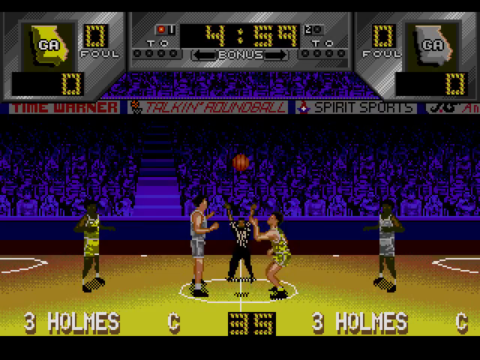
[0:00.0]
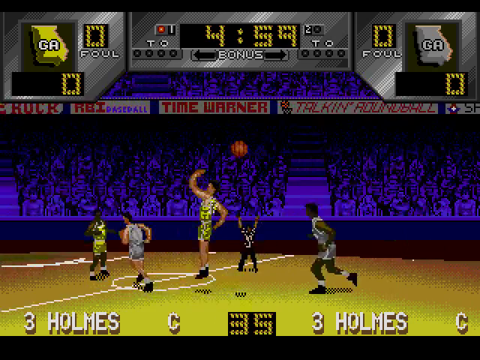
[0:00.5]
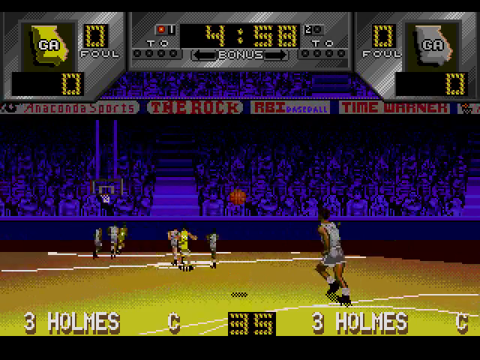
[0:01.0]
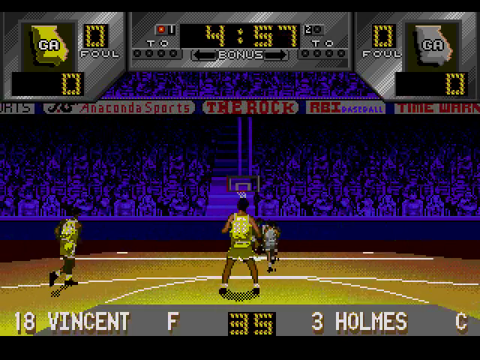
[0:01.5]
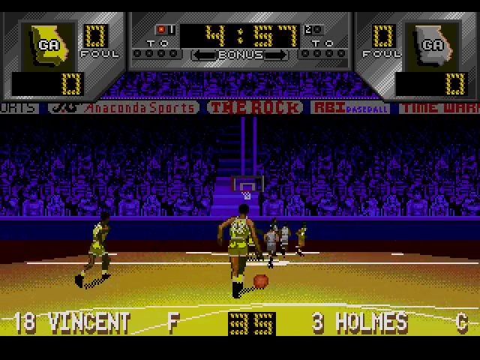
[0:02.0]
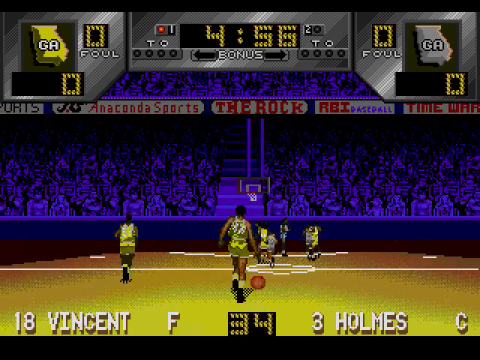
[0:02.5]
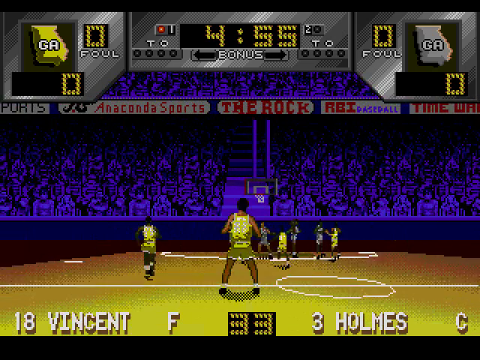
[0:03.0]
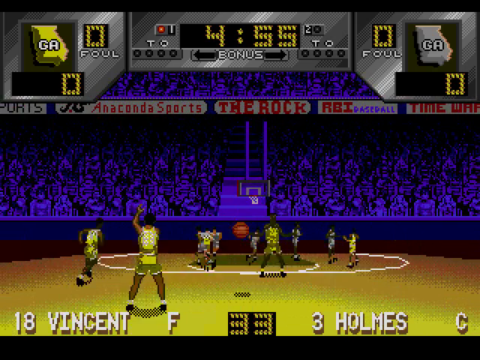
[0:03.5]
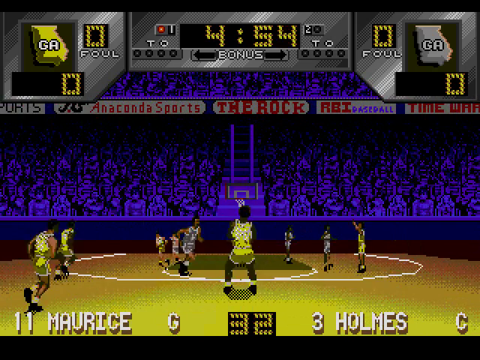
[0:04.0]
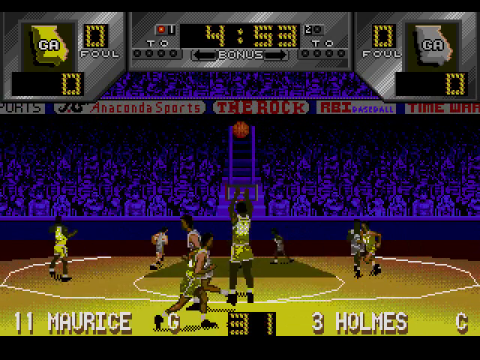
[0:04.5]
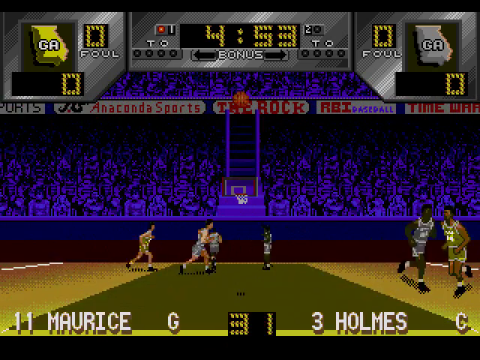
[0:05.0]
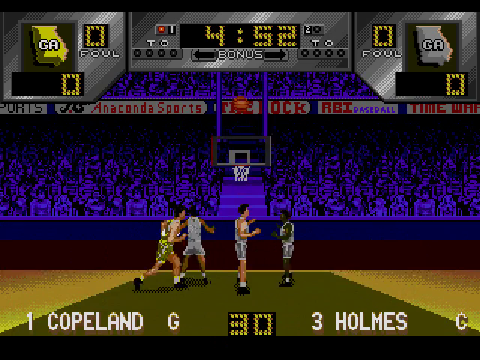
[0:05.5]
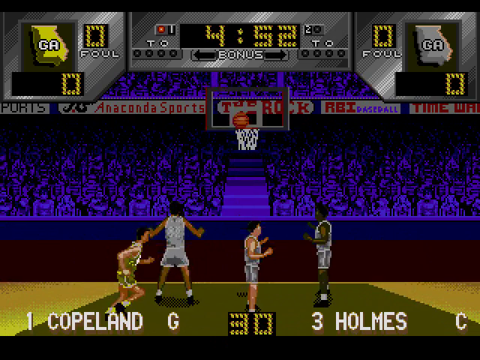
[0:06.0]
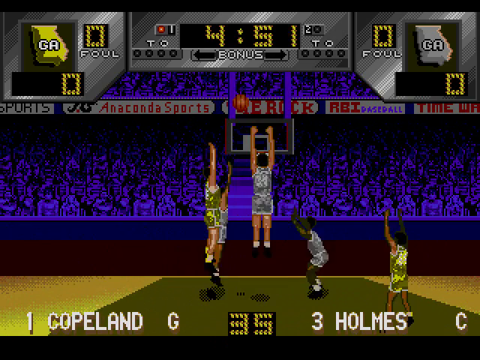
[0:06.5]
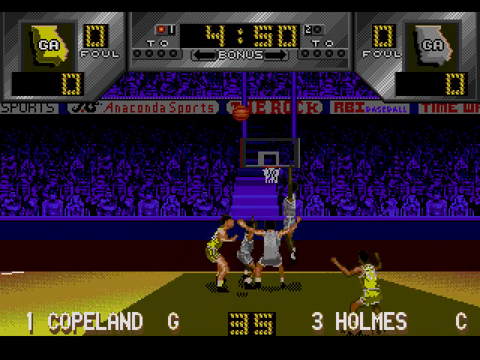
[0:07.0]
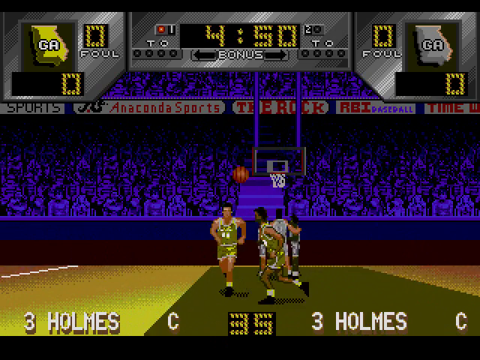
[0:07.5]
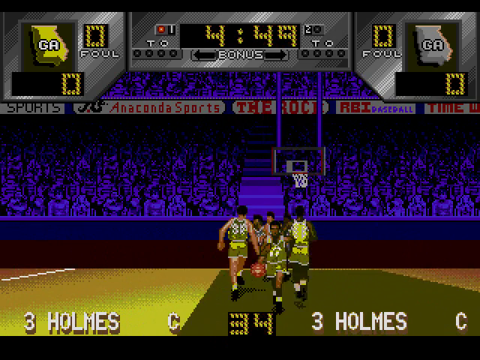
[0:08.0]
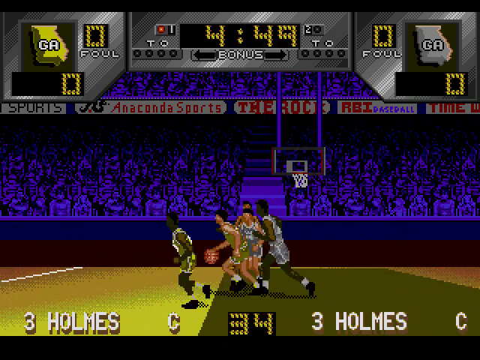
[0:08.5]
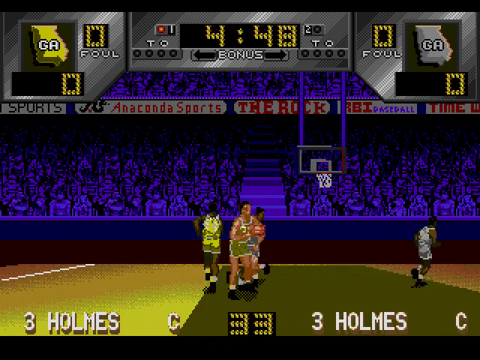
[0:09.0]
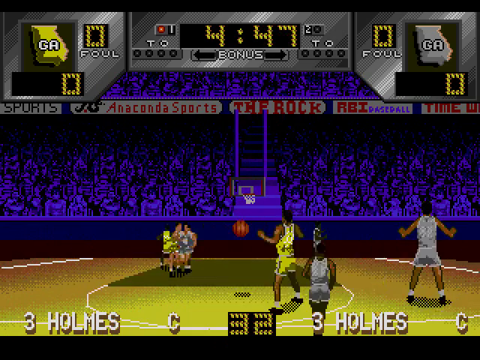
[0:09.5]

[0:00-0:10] This is a basketball video game that looks quite old-fashioned, with a pixelated screen and poor-quality graphics. The camera angle appears to spin so that the opposite side of the court is visible. Someone has just made a shot. Scores are shown at the bottom of the screen, apparently reading "3-5", though they are difficult to read. The team the player represents appears to be the yellow team, playing against a team wearing grey uniforms.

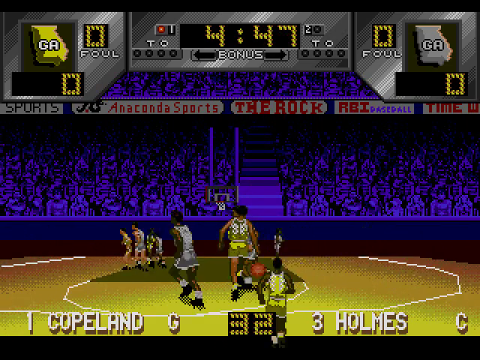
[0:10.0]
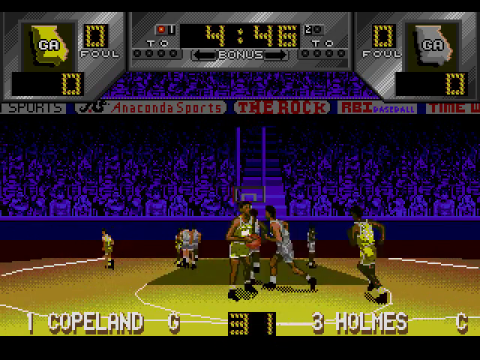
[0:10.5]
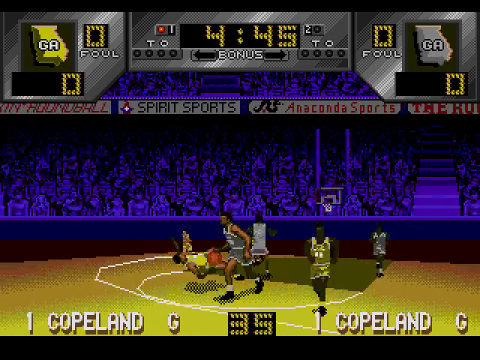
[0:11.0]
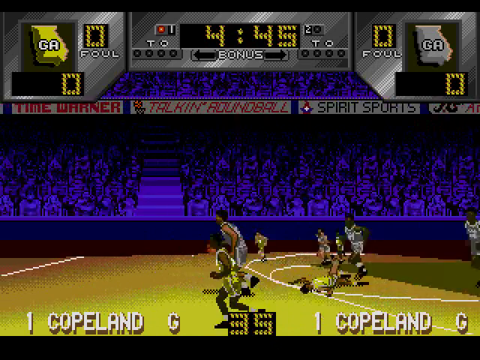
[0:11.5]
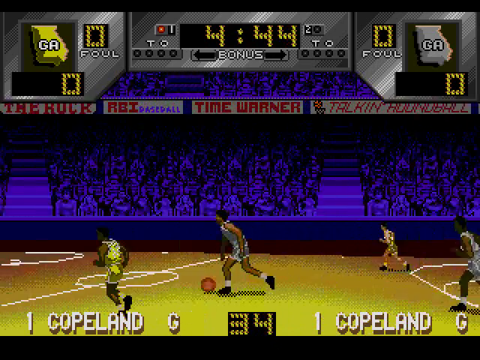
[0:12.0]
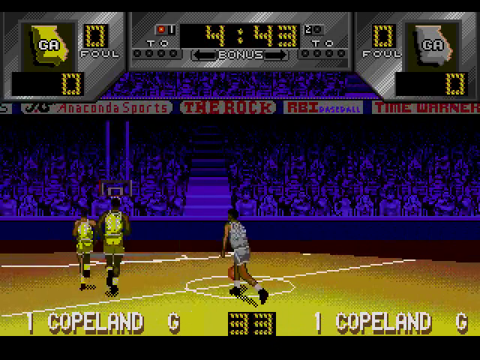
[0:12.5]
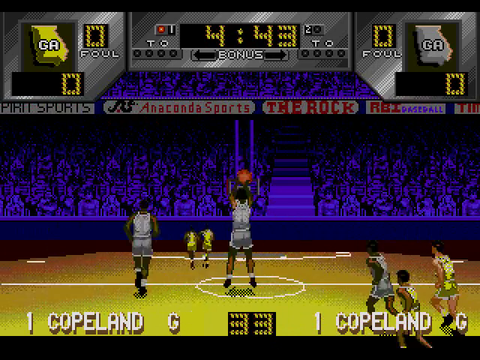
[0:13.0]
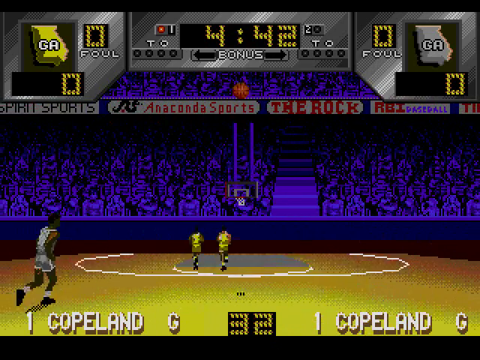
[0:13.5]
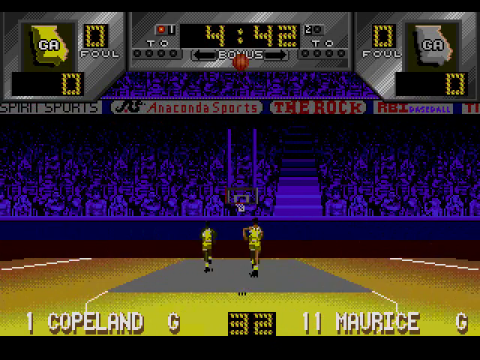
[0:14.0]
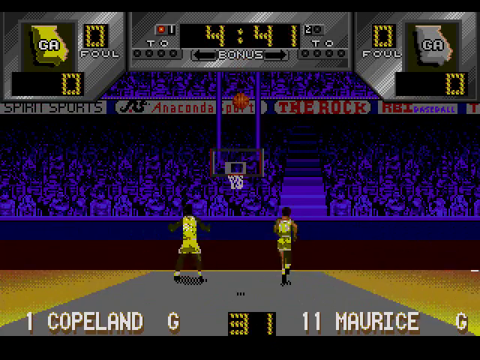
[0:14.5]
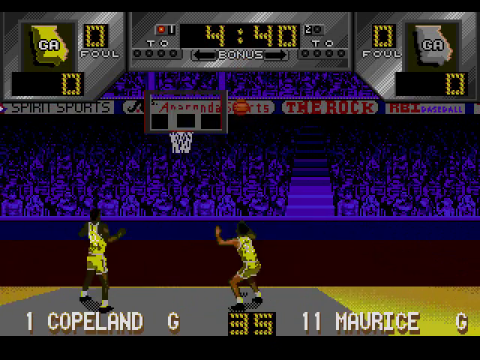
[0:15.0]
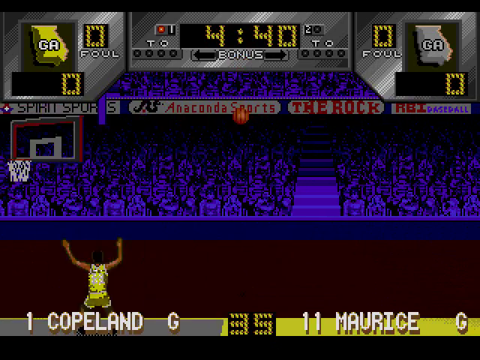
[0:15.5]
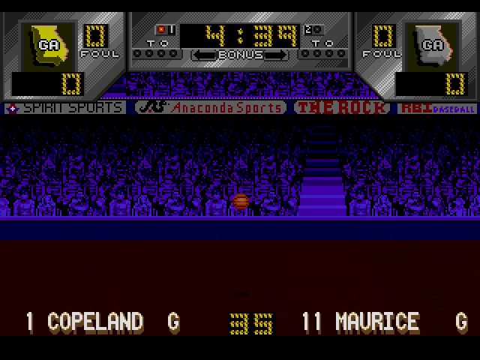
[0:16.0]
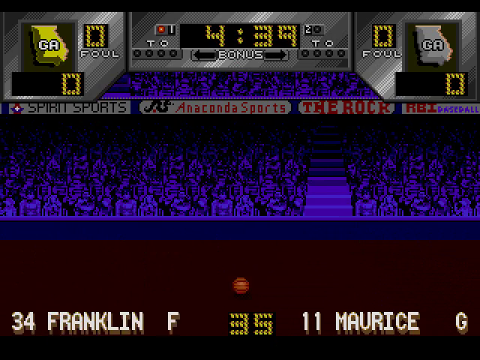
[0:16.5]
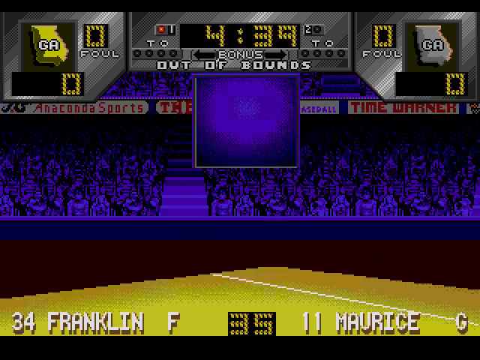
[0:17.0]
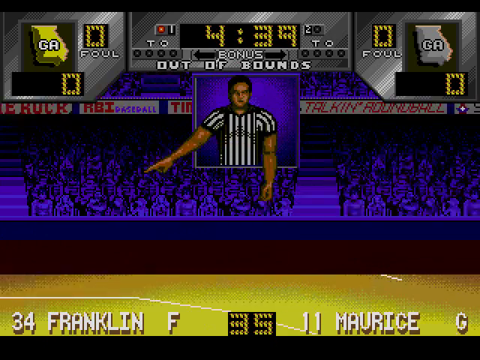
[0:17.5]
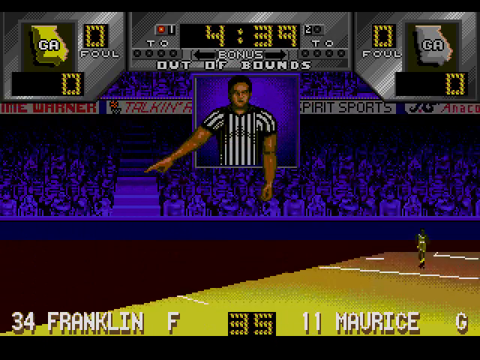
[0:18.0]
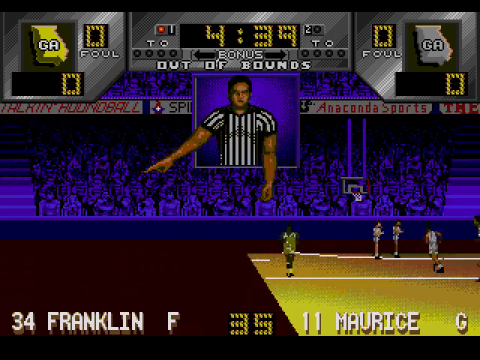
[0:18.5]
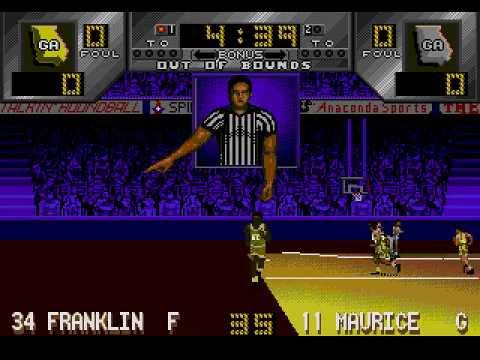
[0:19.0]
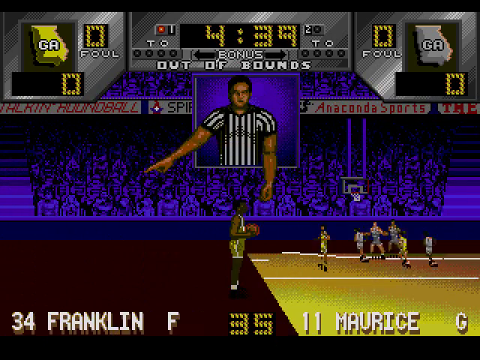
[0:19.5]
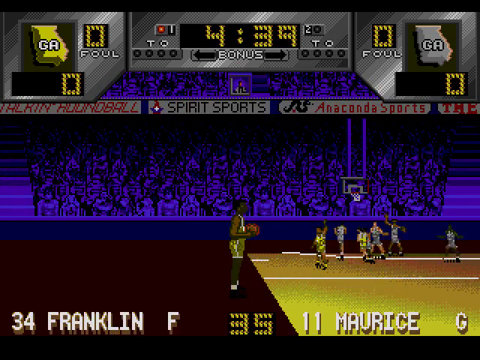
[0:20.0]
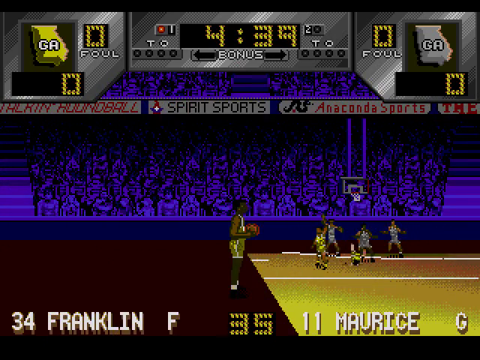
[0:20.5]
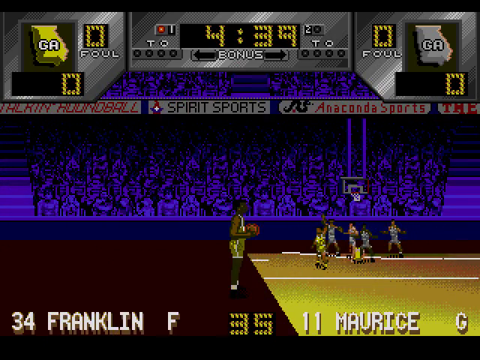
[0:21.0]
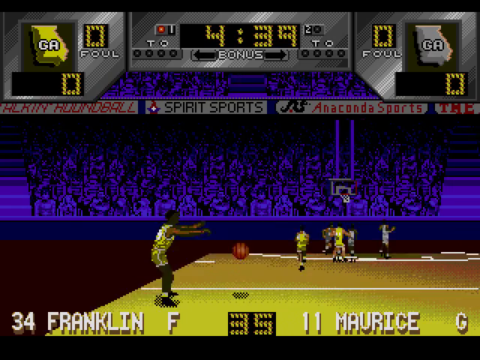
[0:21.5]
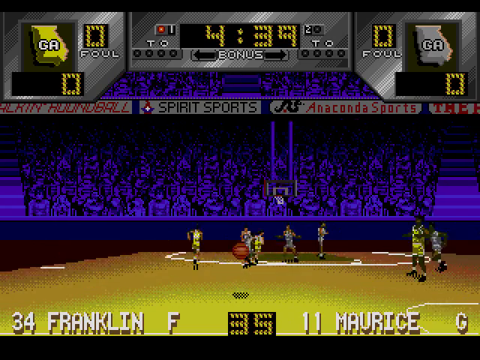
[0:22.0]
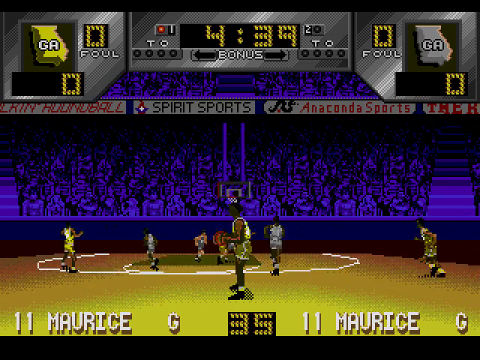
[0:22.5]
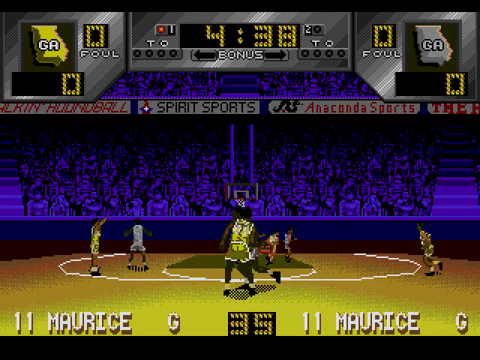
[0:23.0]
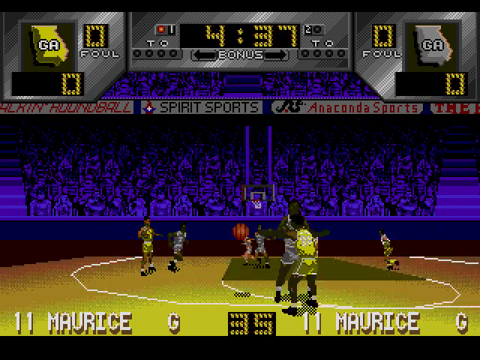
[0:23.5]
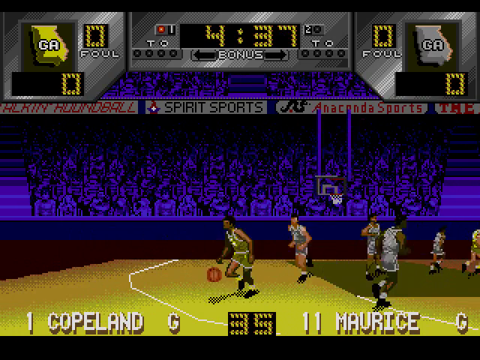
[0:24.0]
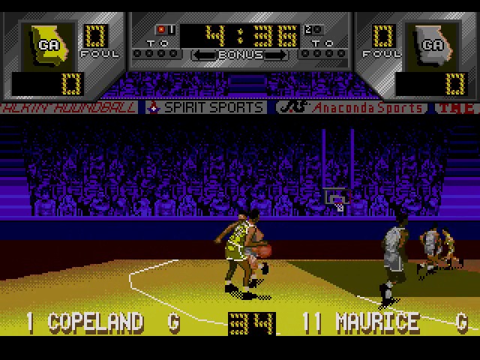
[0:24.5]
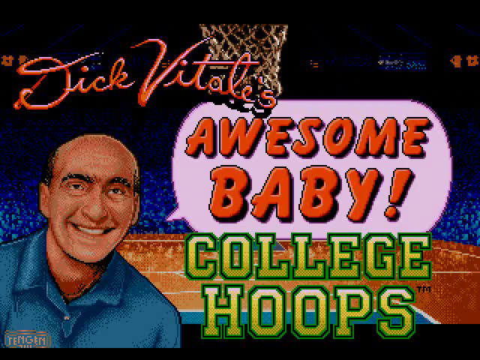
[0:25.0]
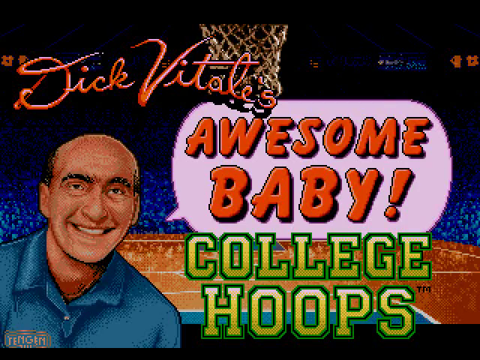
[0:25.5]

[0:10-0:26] A low-quality basketball video game appears to be set in a stadium or at a basketball court, with the game shown from the point of view of the players. The audience in the background is blue. A player in a grey uniform takes a shot at the basket, but it does not go in. A pop-up appears on screen showing someone who looks like a referee, wearing a black and white striped t-shirt, along with text that reads "out of bounds". The camera moves to the edge of the court, where a player in a yellow uniform picks up the ball and throws it back to their players at center court. Right at the end, text appears on screen reading "awesome baby college hoops", along with text beginning "Dick", apparently a name, in a font that is difficult to read.